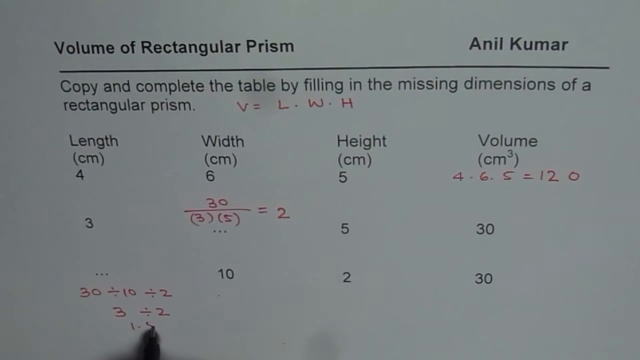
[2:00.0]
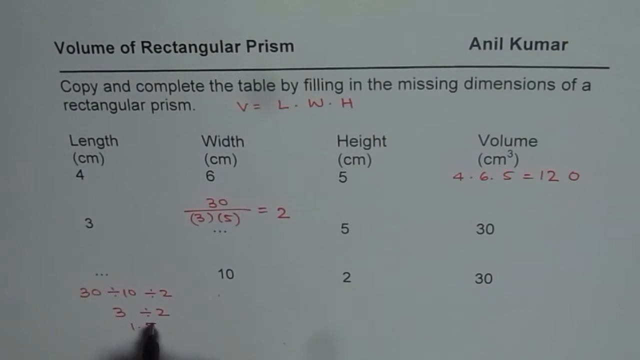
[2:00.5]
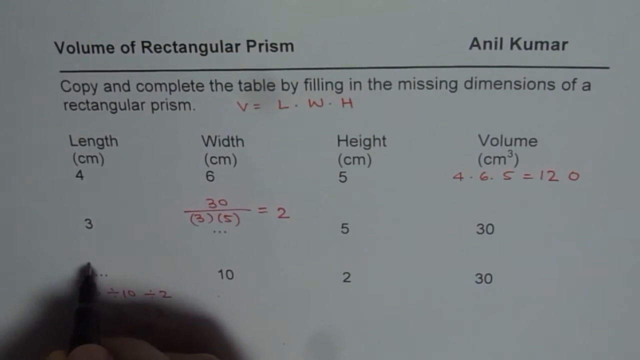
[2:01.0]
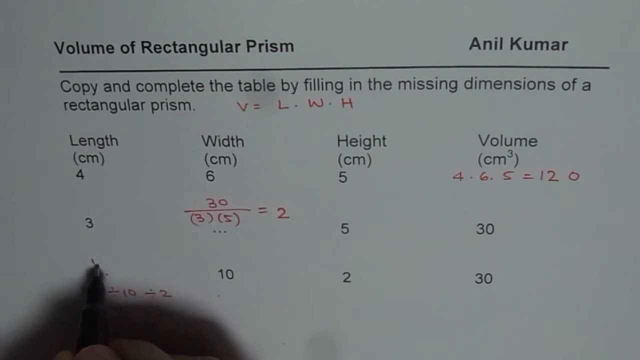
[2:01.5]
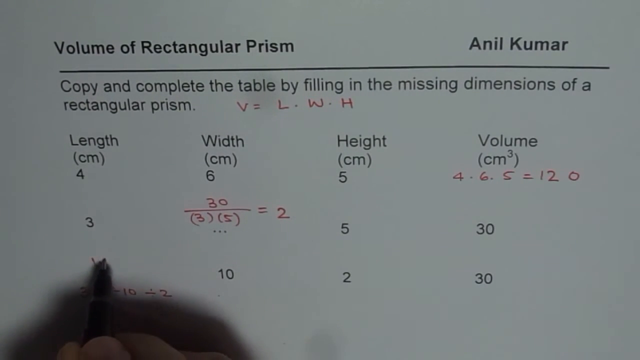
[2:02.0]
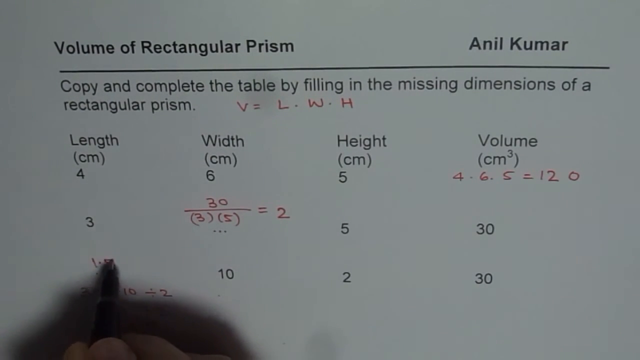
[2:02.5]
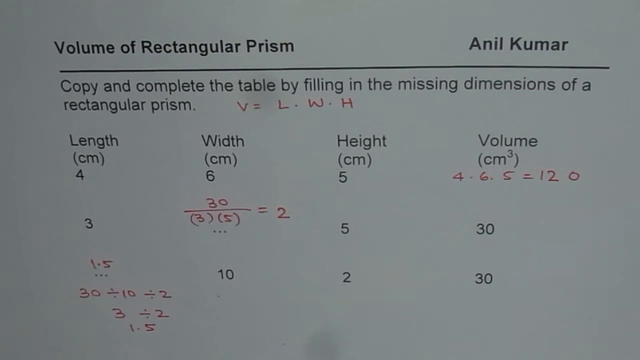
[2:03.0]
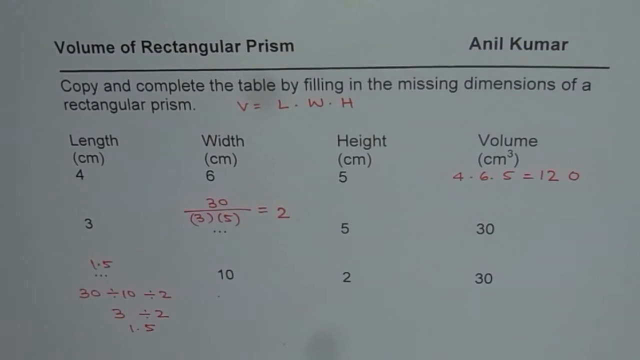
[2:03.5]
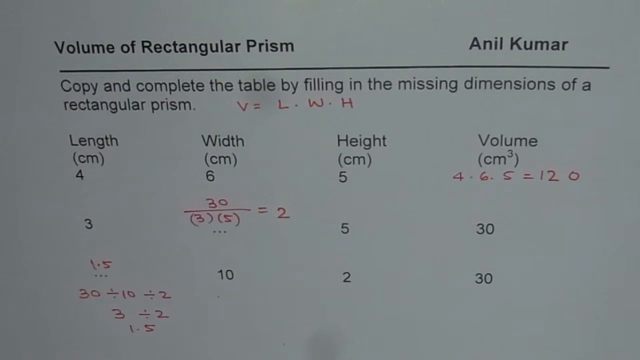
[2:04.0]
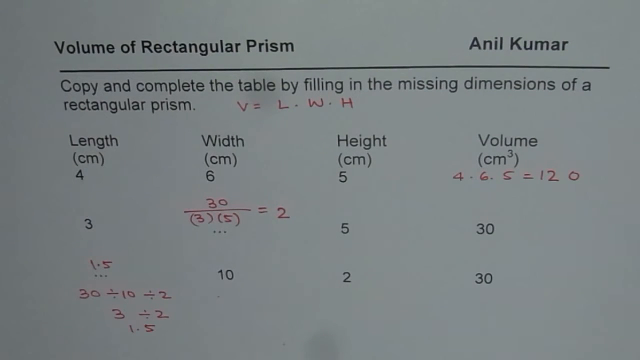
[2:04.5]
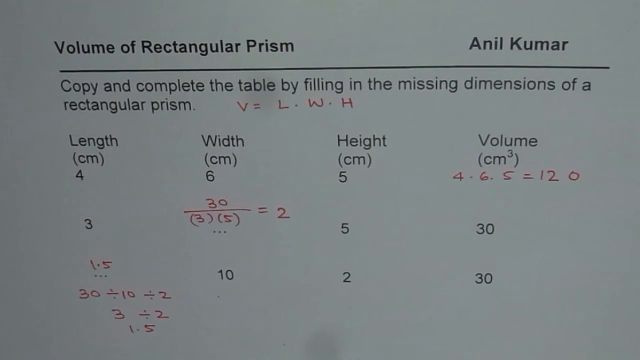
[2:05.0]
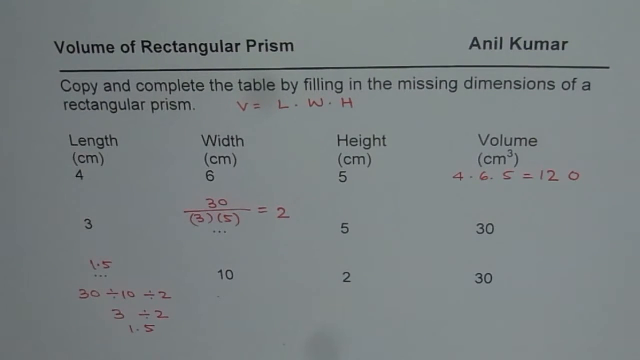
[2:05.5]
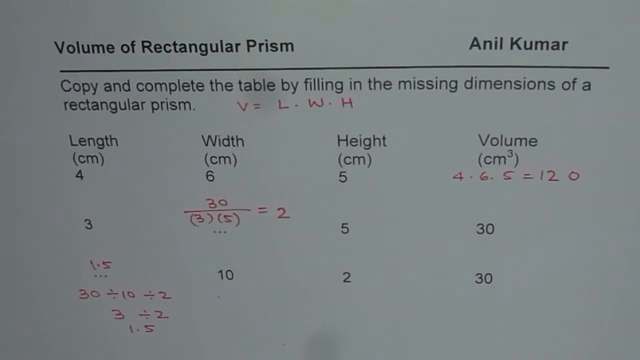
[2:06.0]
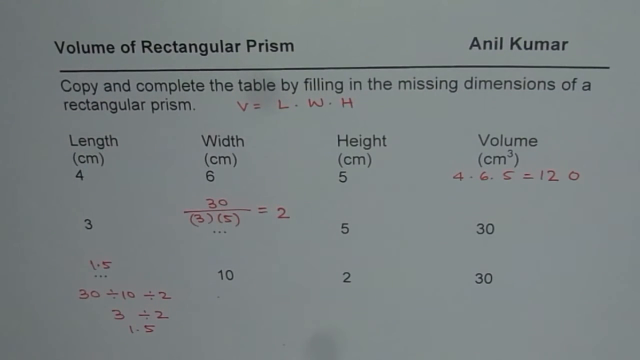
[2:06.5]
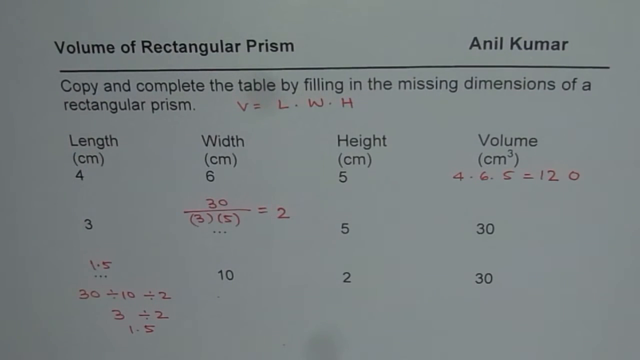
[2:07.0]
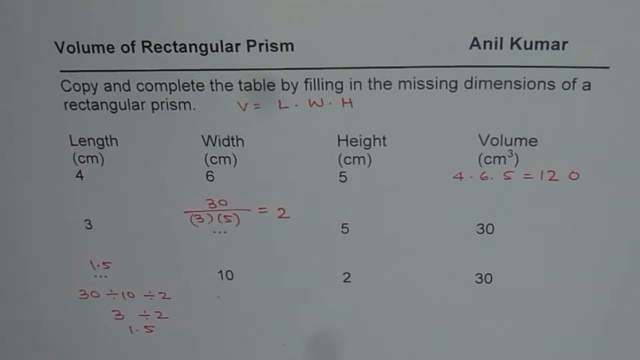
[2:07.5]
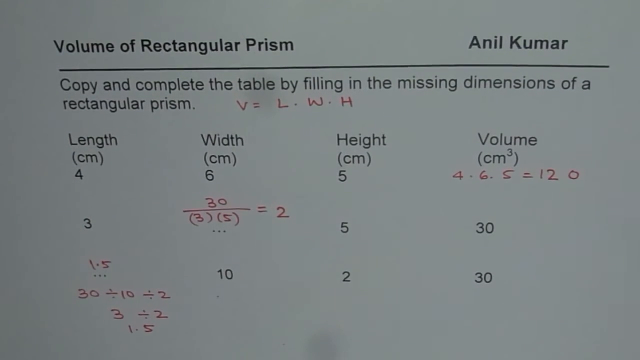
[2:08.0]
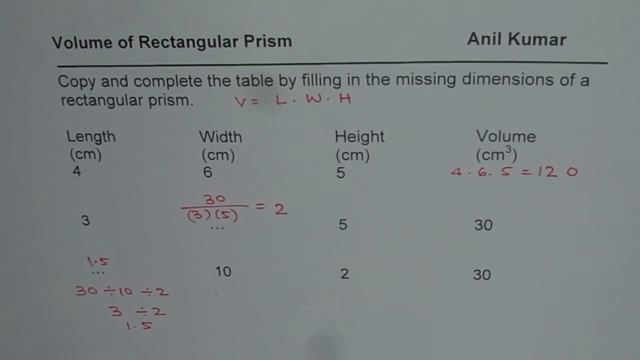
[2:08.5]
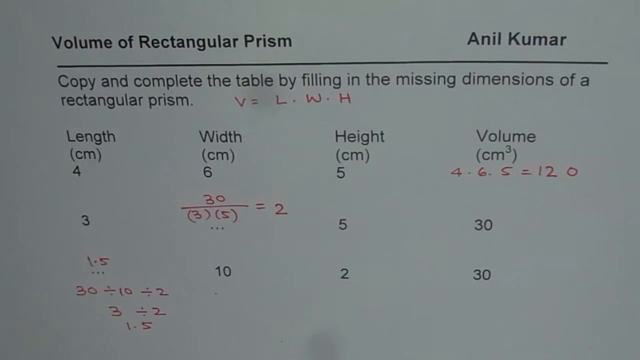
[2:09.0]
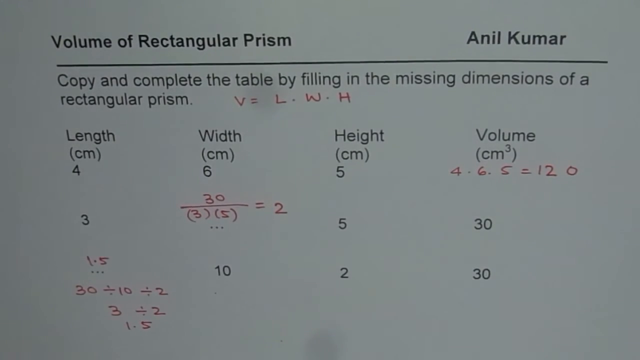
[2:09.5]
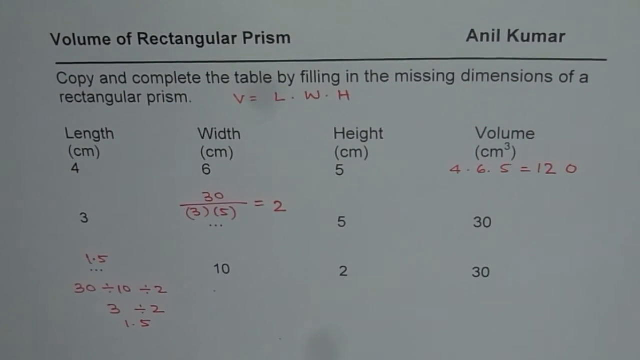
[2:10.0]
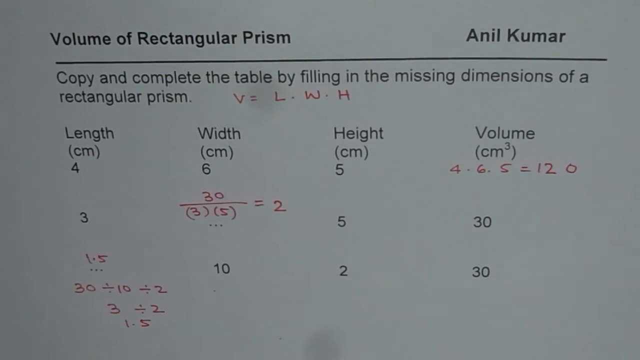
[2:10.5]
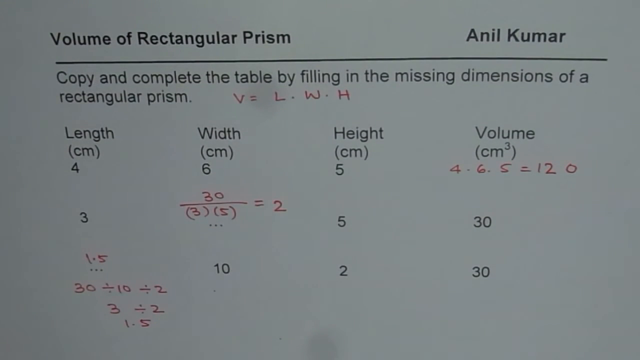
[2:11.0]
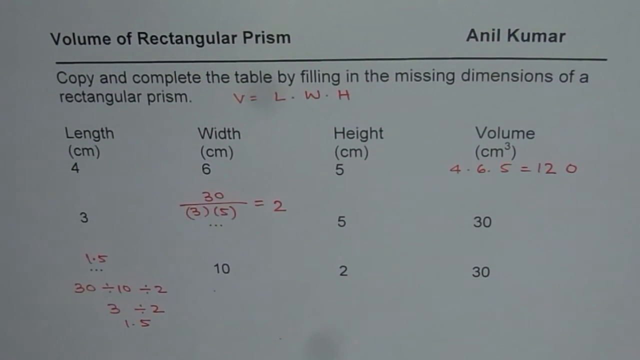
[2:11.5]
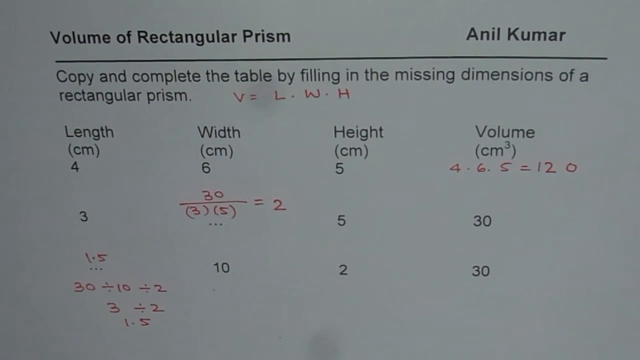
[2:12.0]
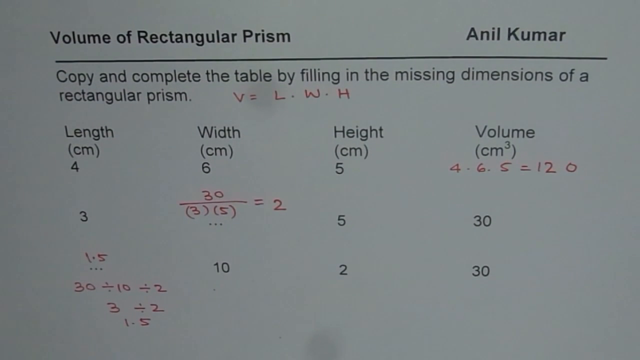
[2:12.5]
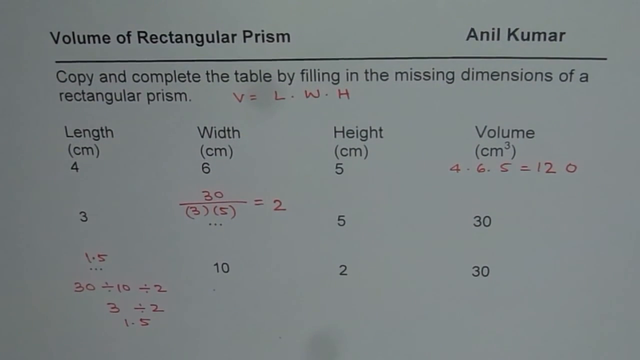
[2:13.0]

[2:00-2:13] Underneath the length column are the problems 30 ÷ 10 ÷ 2 and, below it, 3 ÷ 2. The person writes a 1 and then a 5 underneath the 3 ÷ 2, then writes 1.5 above that problem. They remove their hand and the pen from the screen, and the page stays idle for several seconds, with the camera just focusing on the page and the problems and equations written on it. Everything has been filled in, and the missing dimensions of the rectangular prism have been completed.